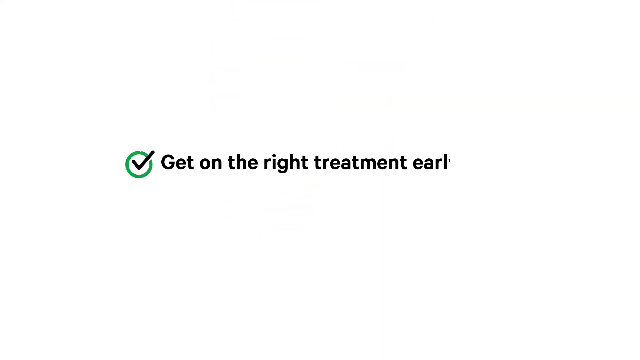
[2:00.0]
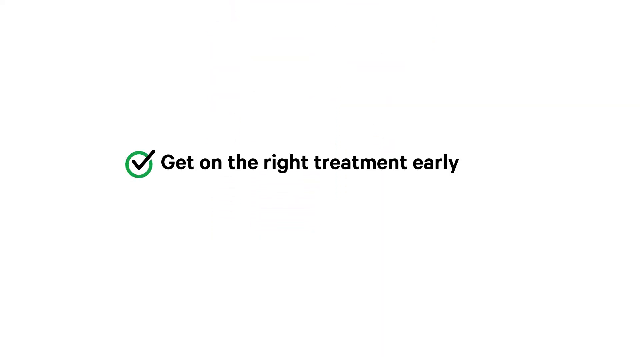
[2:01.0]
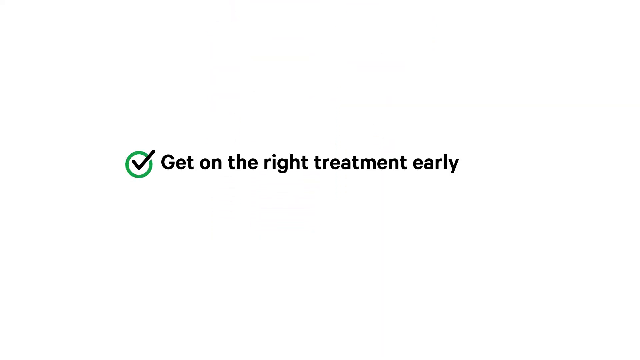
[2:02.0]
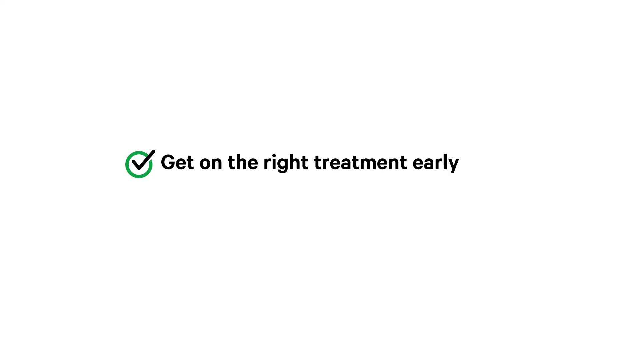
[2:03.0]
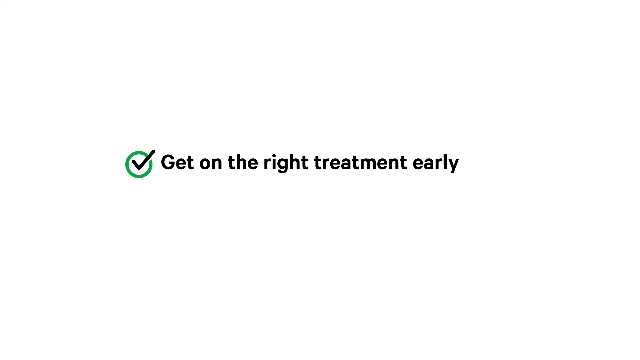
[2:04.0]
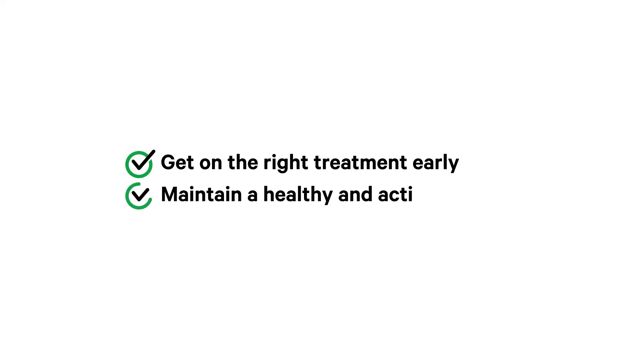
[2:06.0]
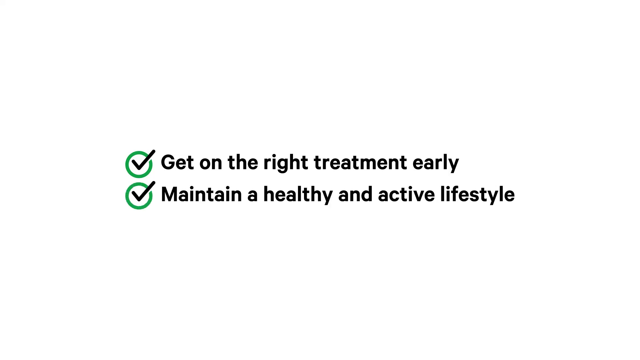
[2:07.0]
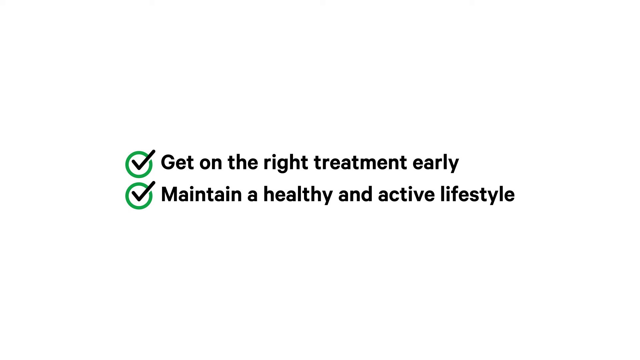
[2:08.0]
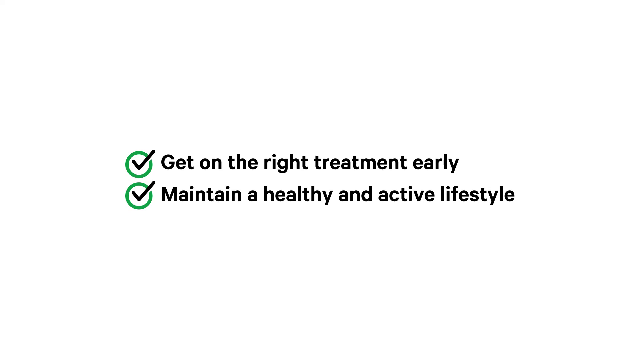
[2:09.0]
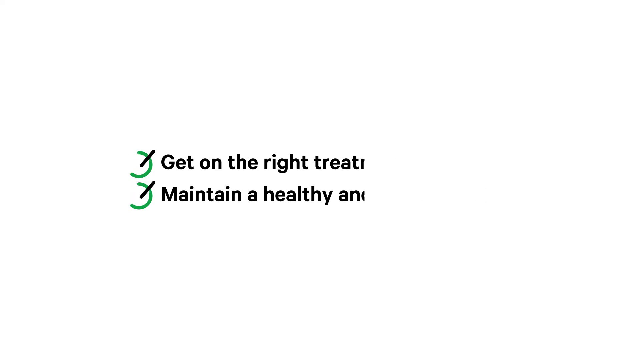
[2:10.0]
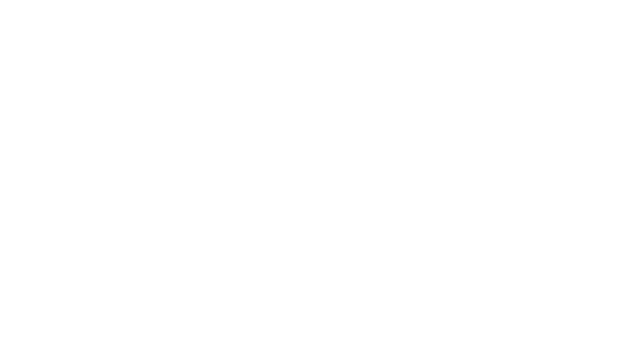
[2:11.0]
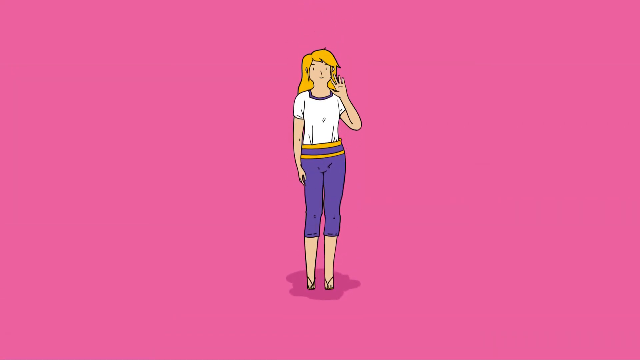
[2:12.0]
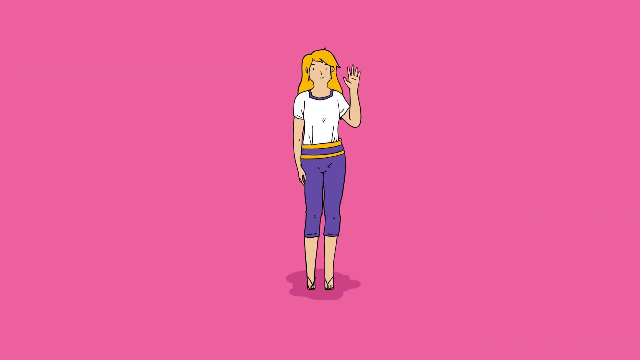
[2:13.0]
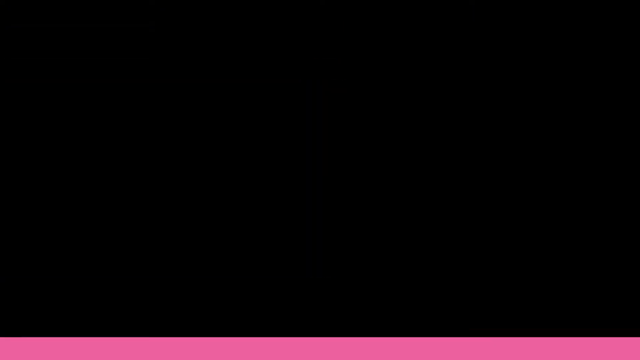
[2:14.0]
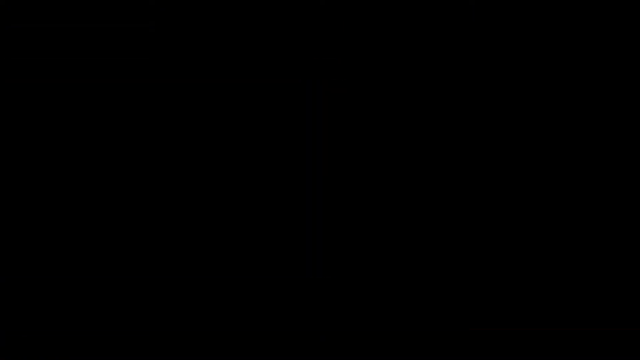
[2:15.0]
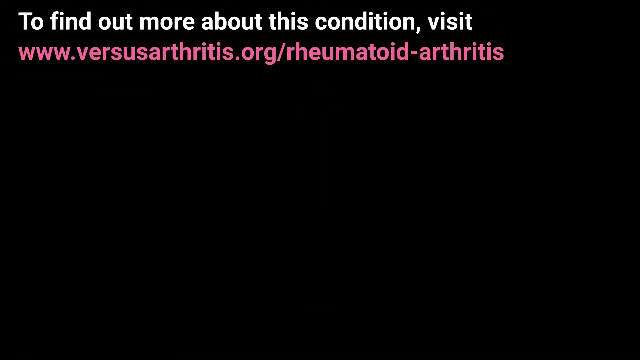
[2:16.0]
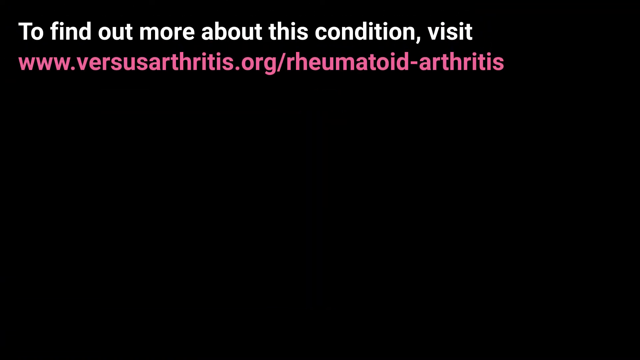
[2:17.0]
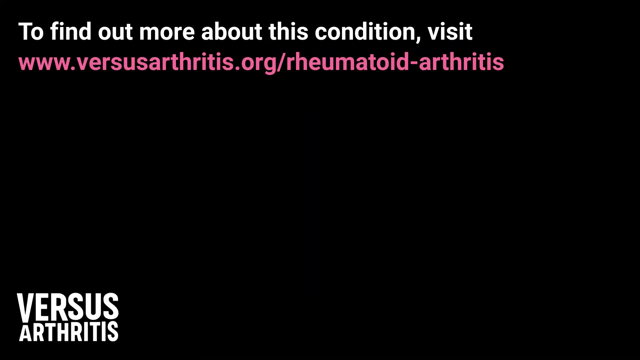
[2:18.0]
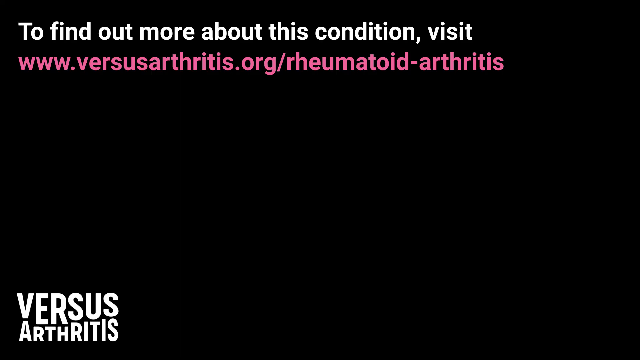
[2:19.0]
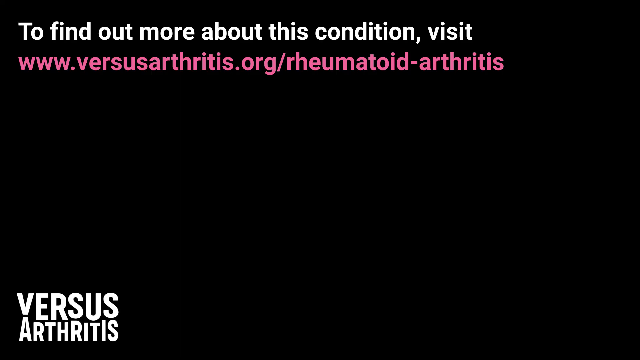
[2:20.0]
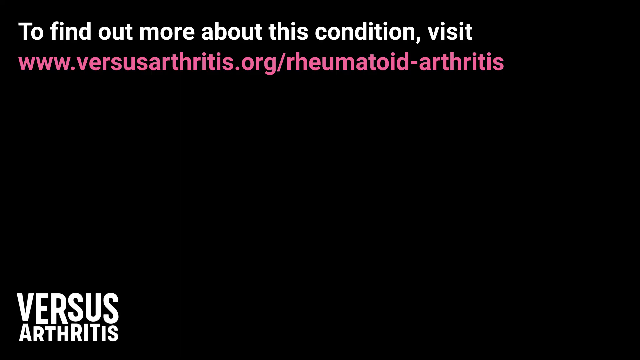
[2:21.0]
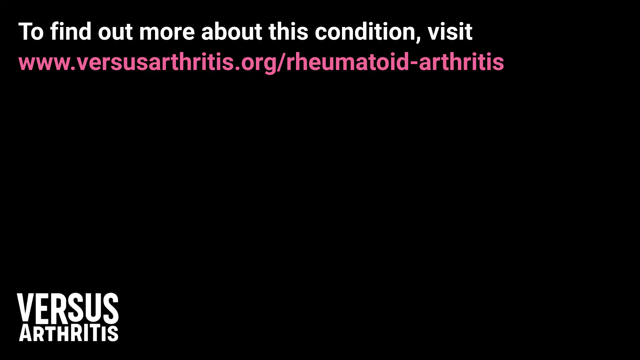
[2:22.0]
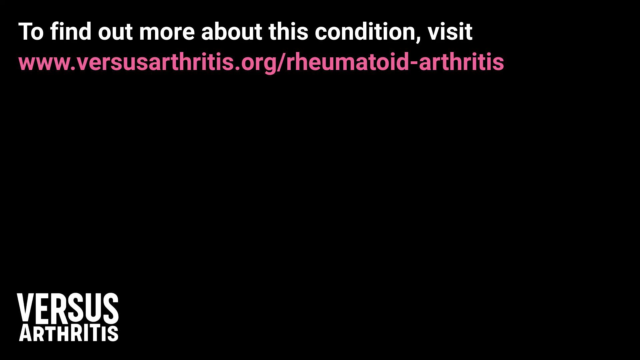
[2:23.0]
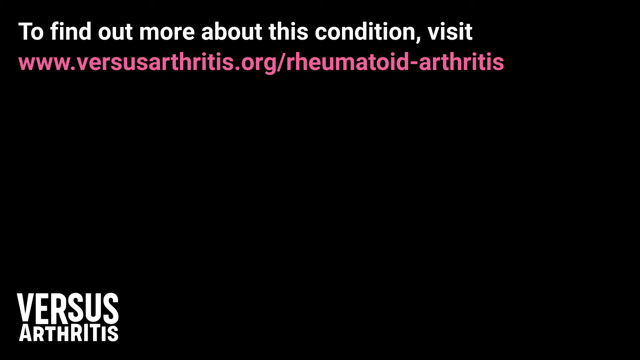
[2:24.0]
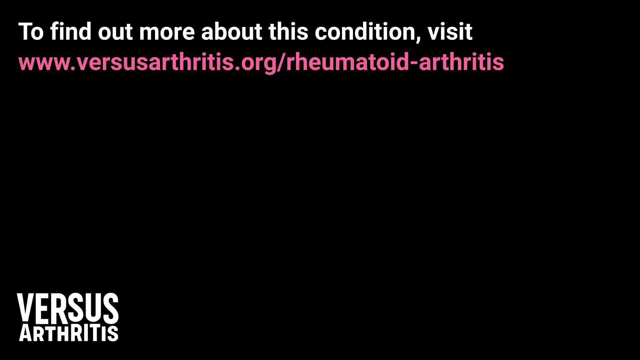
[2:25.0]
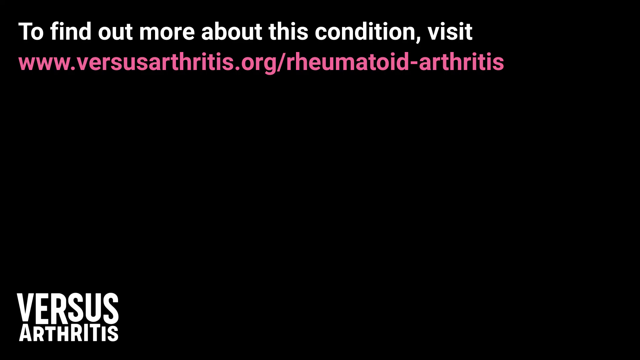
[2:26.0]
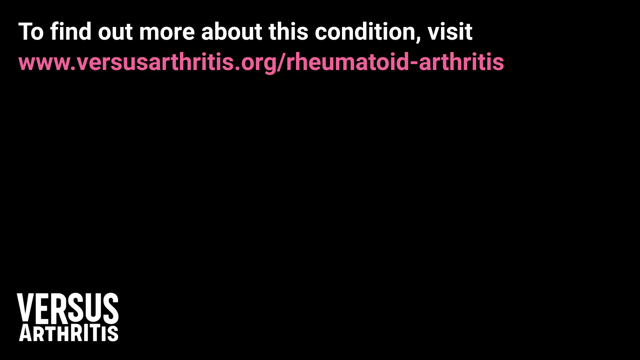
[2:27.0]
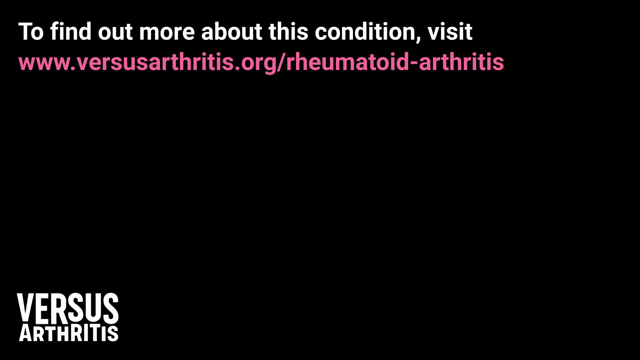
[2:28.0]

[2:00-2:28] The text "get on the right treatment early" appears, followed by "maintain a healthy and active lifestyle". An animated lady with long golden hair, a white shirt, blue pants and what might be flip-flops stands against a pink background, waving toward the camera, possibly indicating she is feeling better. The screen then goes black and a web address appears in pink, with "To find out more about this condition, visit" in white lettering on the black background. Text reading "Versus arthritis" and "rheumatoid arthritis" also appears near the end.